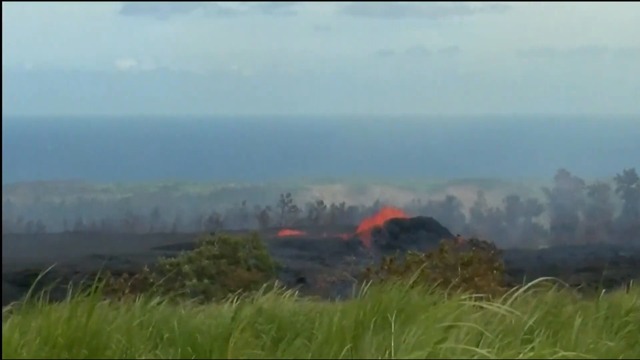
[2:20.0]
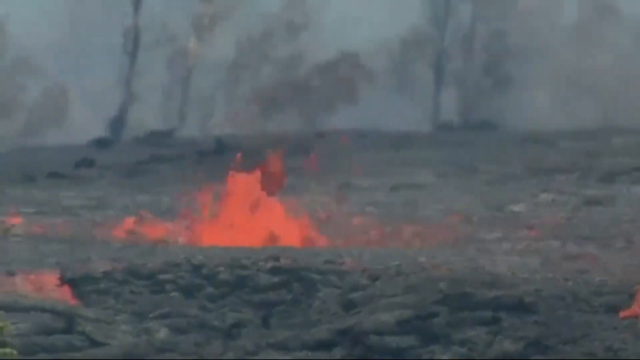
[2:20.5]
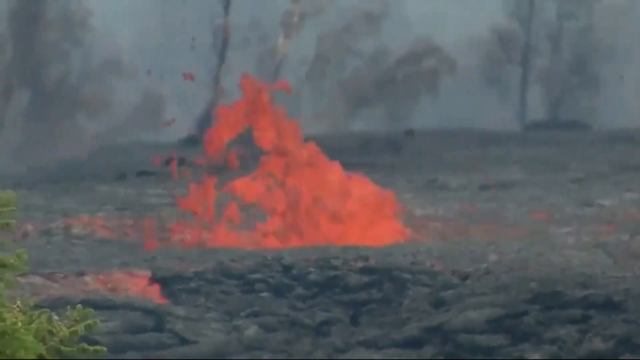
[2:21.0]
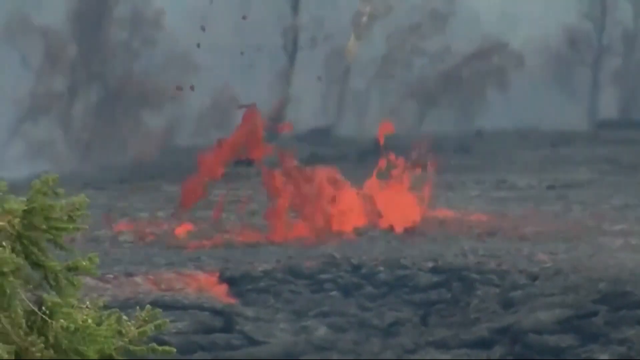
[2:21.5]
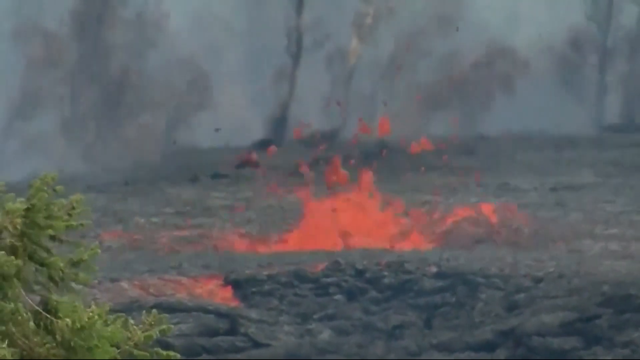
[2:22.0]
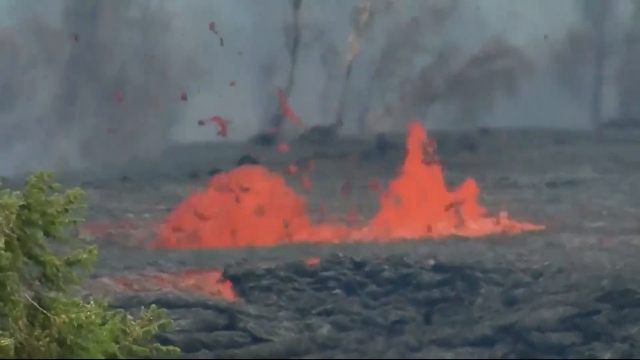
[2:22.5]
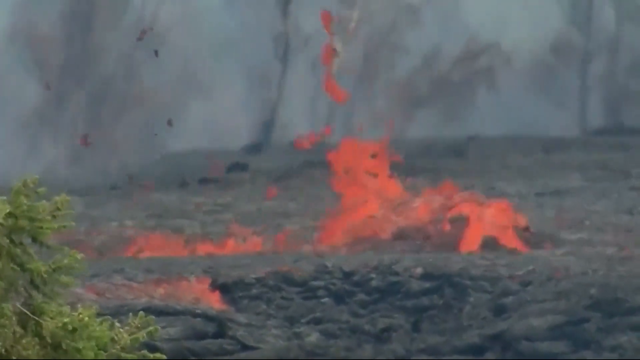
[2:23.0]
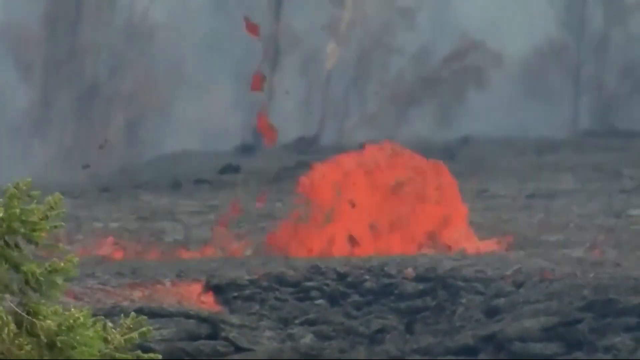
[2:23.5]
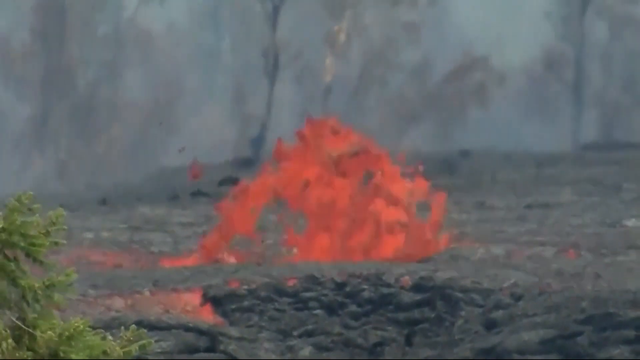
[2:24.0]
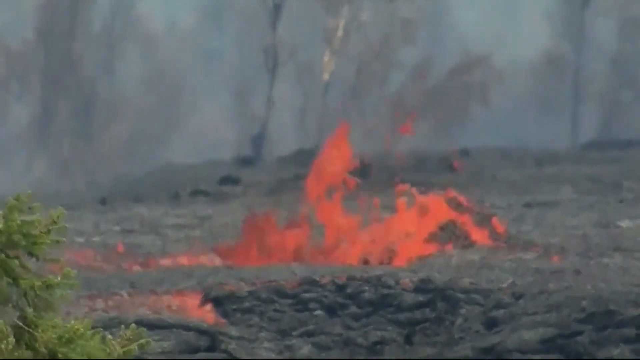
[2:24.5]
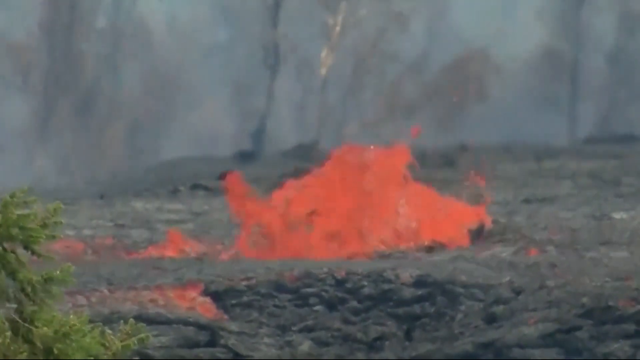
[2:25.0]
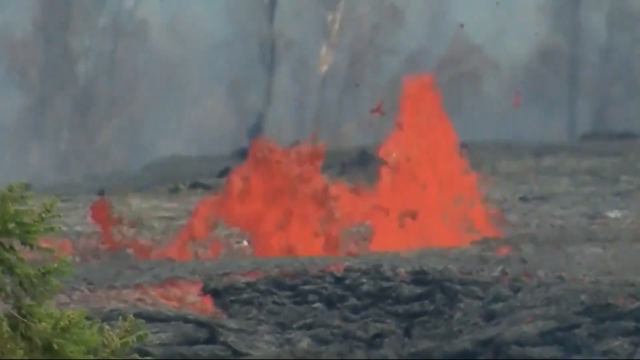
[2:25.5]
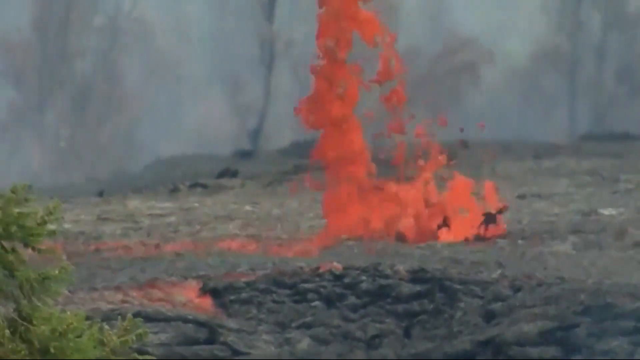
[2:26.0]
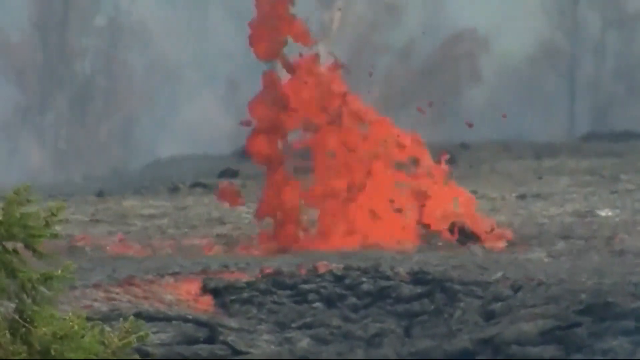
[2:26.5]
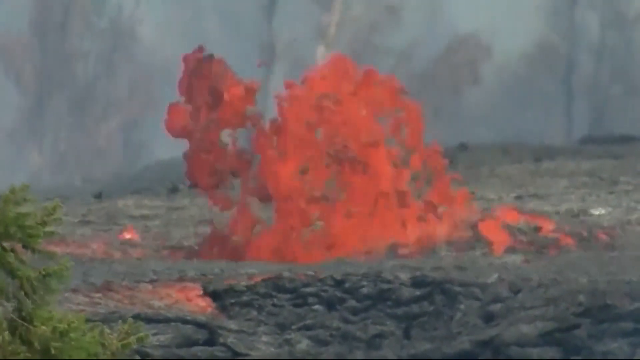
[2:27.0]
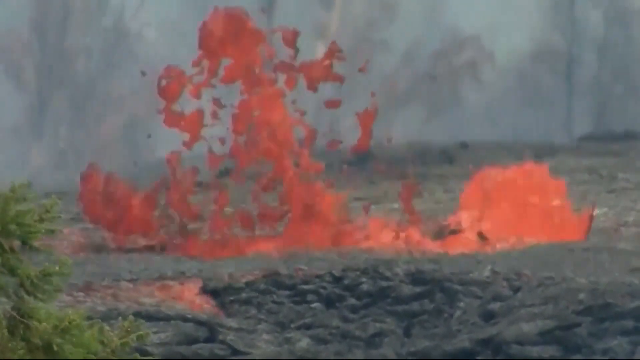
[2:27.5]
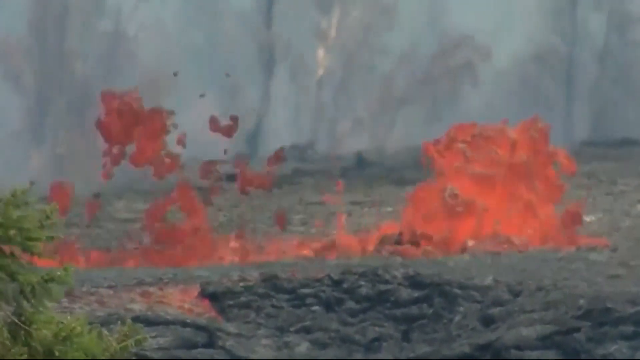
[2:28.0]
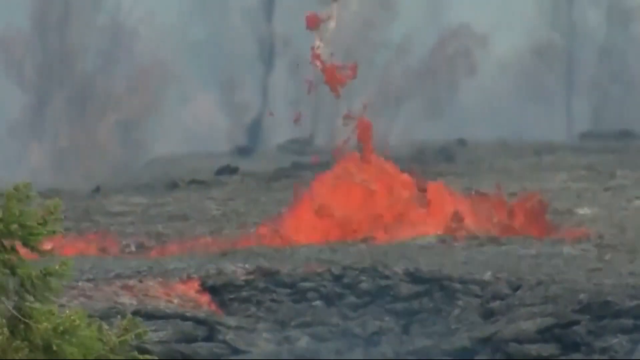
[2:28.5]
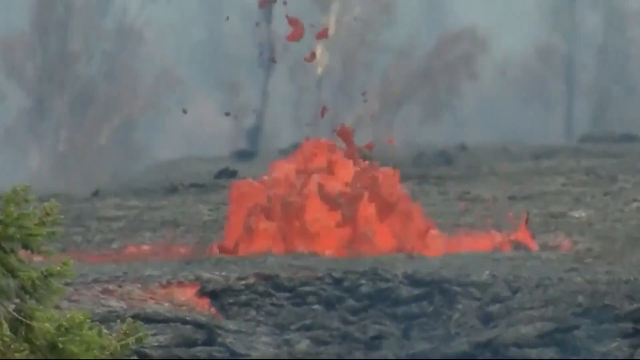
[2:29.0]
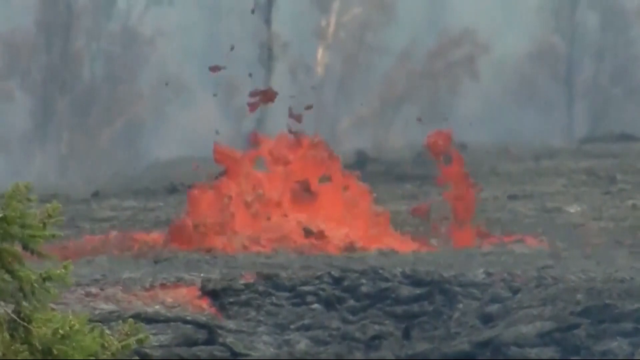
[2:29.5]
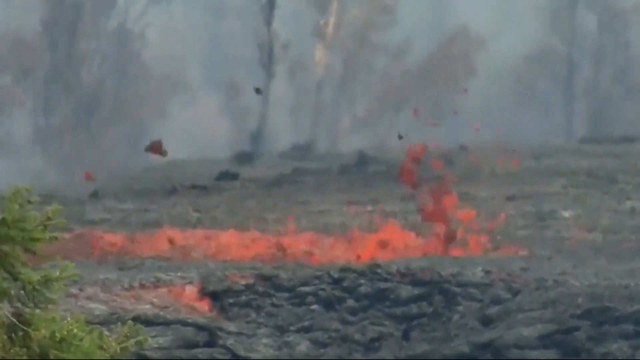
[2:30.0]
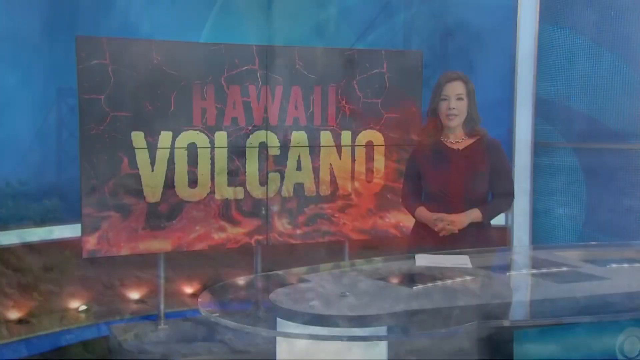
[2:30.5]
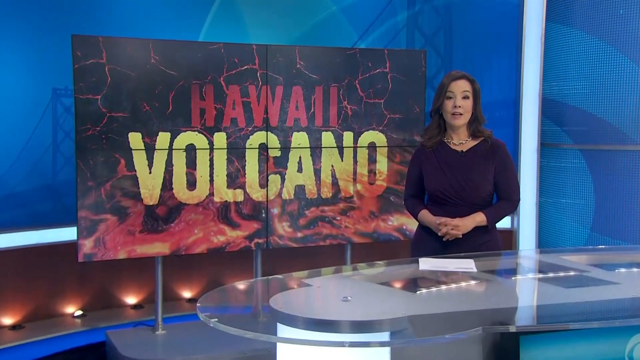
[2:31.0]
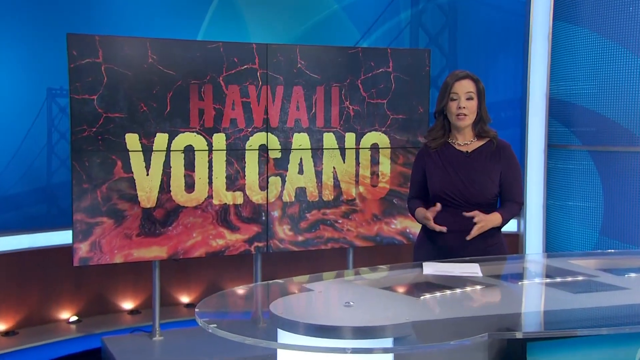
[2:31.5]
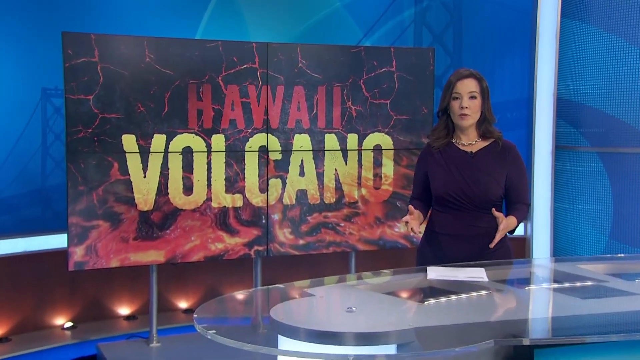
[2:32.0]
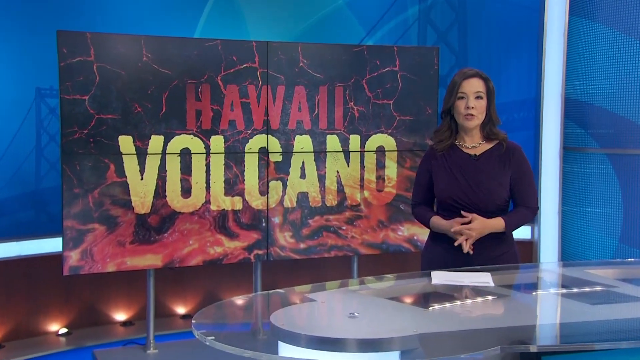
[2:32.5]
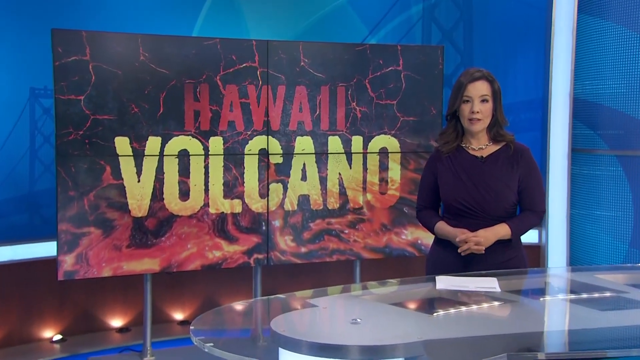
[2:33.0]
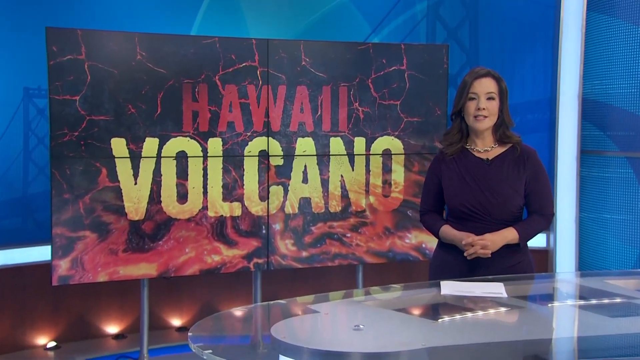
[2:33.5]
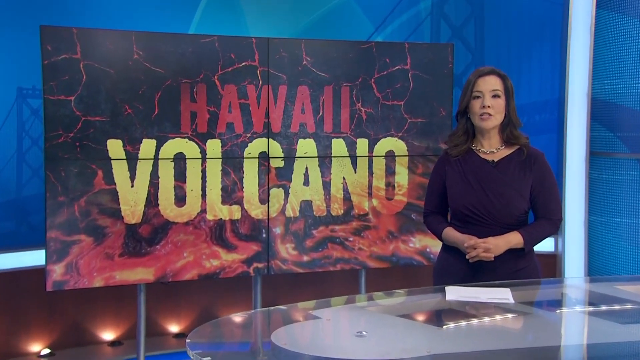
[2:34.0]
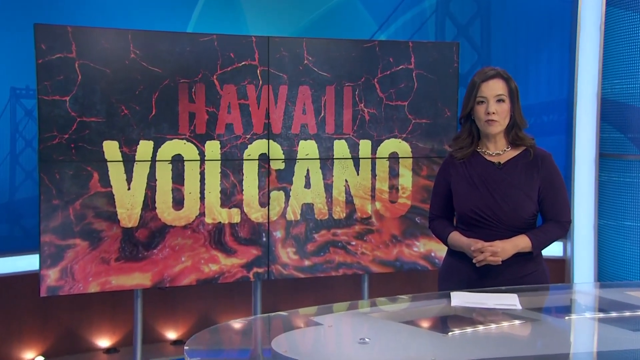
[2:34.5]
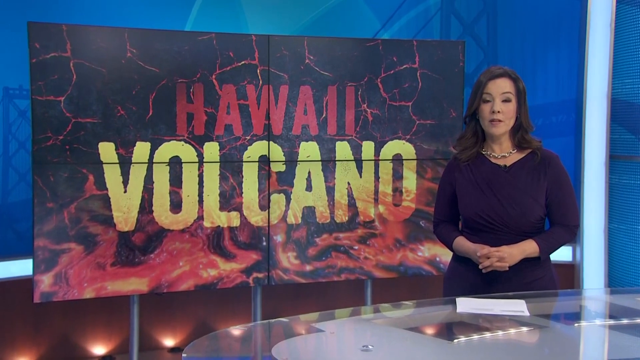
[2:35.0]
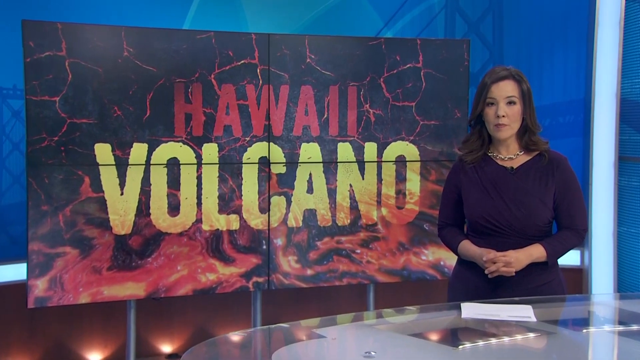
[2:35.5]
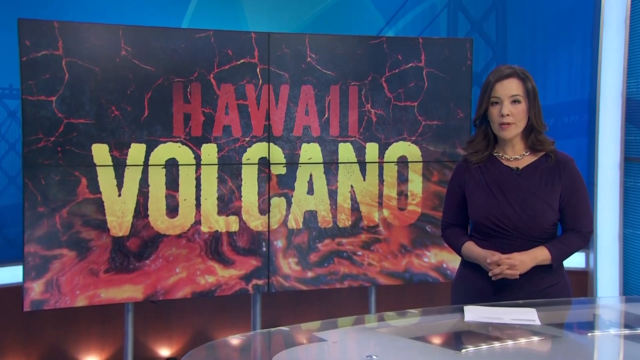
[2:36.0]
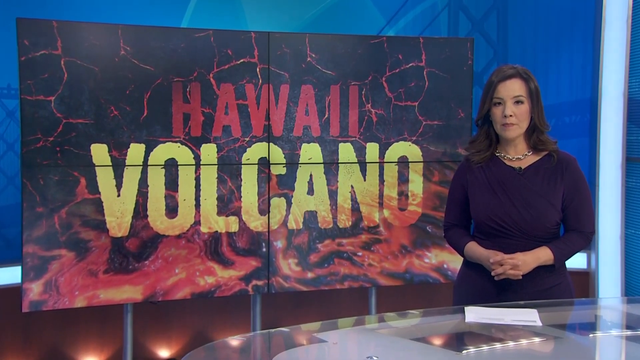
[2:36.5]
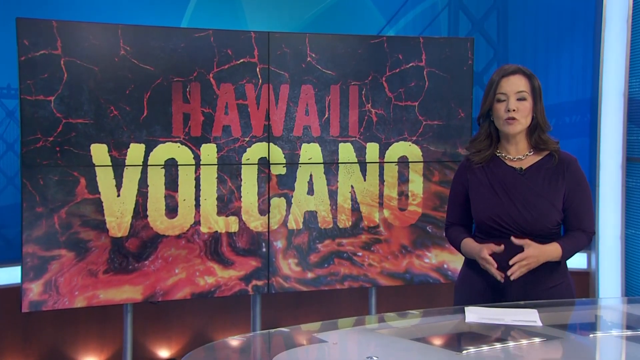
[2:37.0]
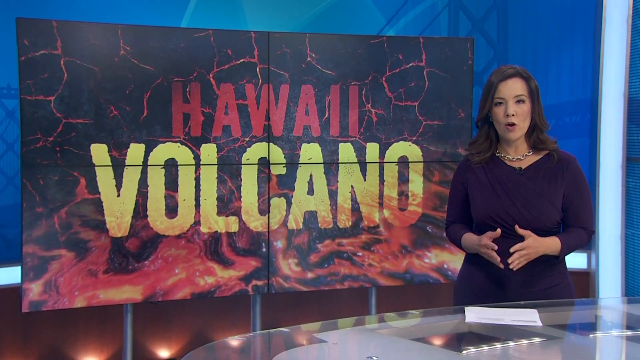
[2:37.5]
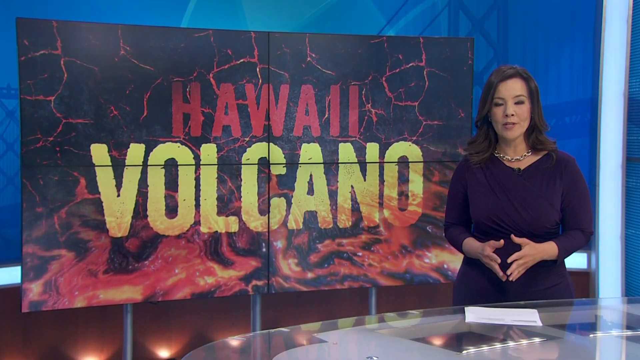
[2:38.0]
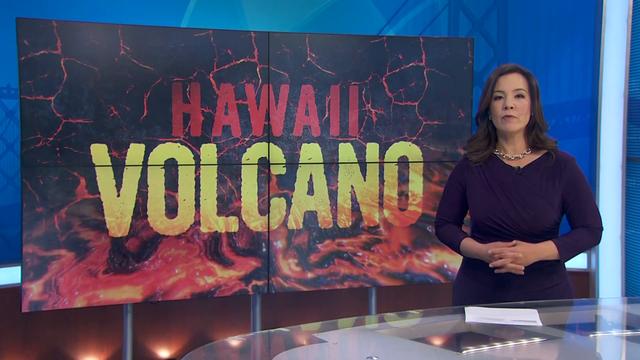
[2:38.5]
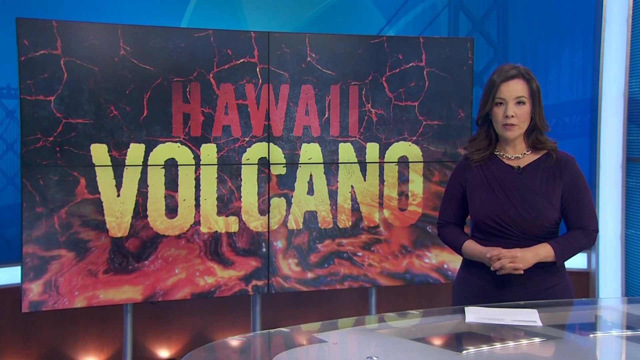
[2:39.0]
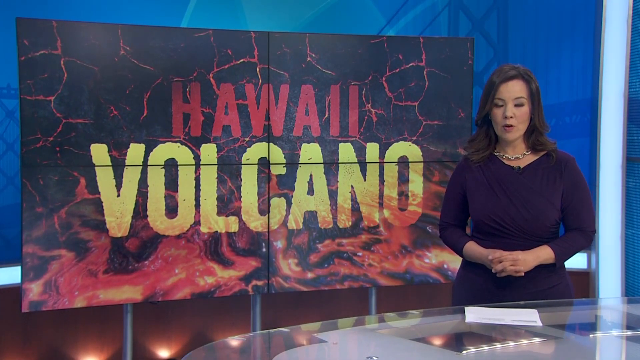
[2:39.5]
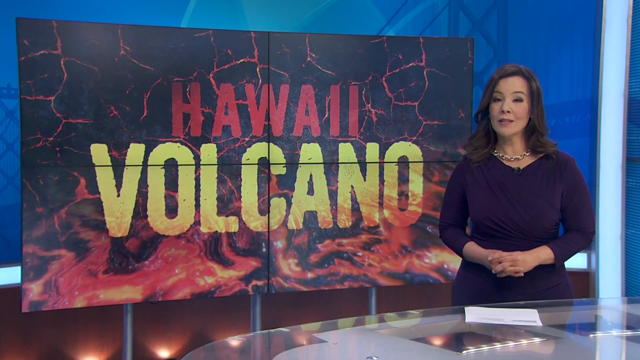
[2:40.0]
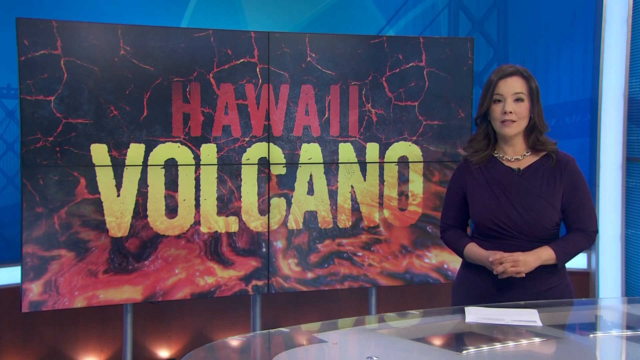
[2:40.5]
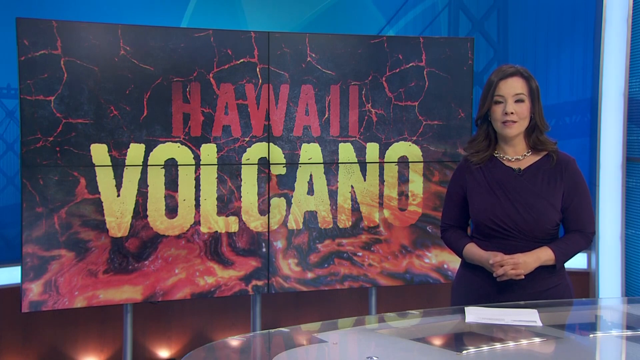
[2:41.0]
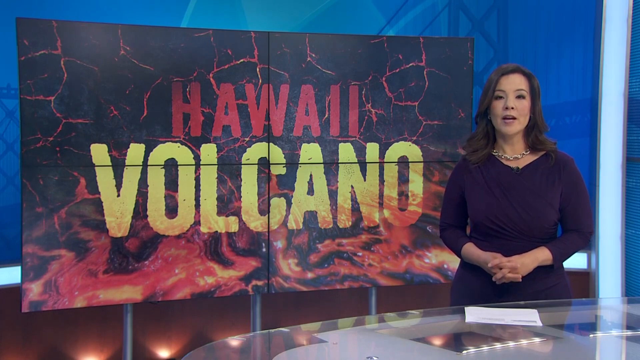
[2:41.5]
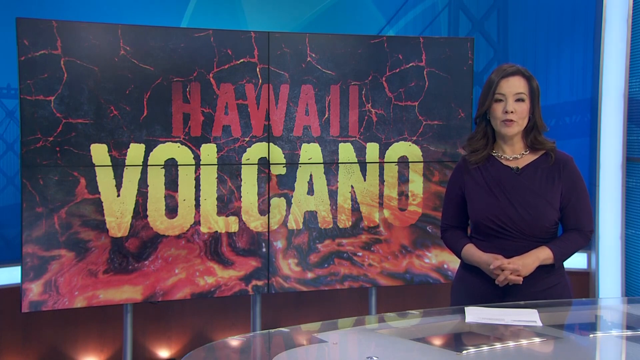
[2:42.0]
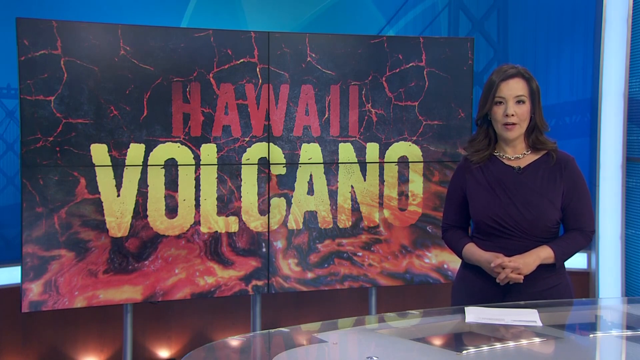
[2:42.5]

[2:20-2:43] Footage shows what appears to be the volcanic eruption during the daytime, then fades to a more up-close view of bubbling lava and mud in not-great-quality footage that looks almost shaky. It fades out to a newscast at a news station with a female reporter on the right side of the screen. She has dark hair, a purple dress and a gold necklace. A screen behind her is split into four parts and says "Hawaii Volcano" in large letters: "Hawaii" is in red letters, and below it "volcano" is in even larger yellow letters, against a background that looks like an animated version of volcanic rock with some lava at the bottom. The camera slowly zooms in on the reporter, who is talking with her hands while facing the camera.